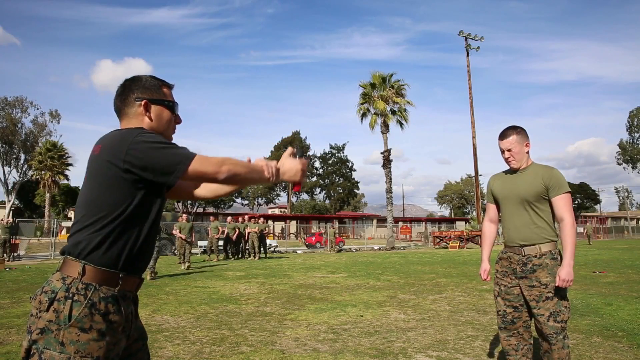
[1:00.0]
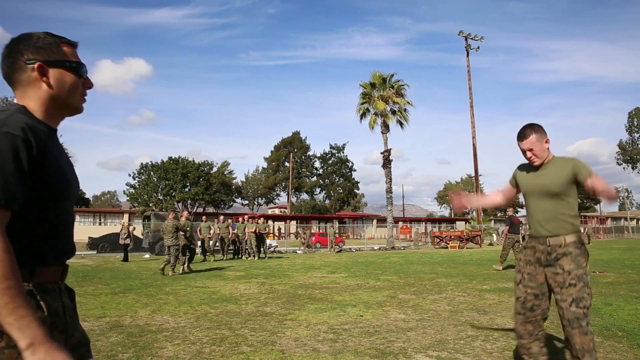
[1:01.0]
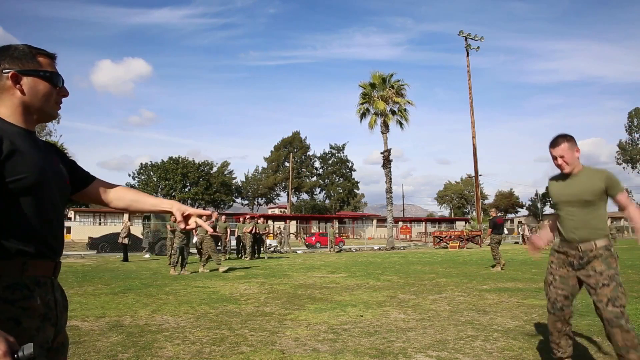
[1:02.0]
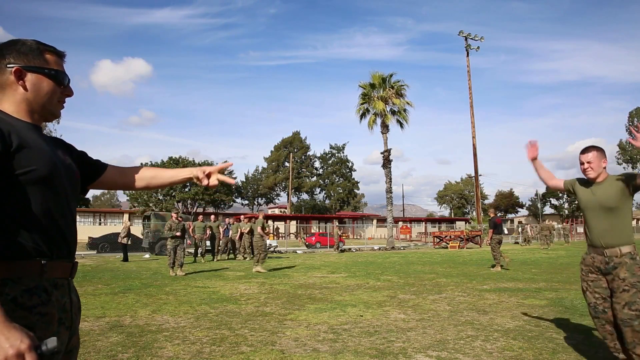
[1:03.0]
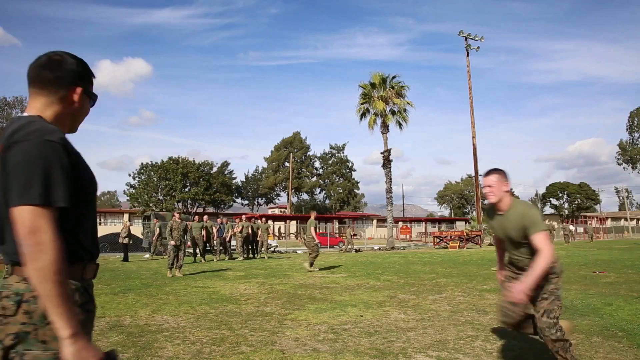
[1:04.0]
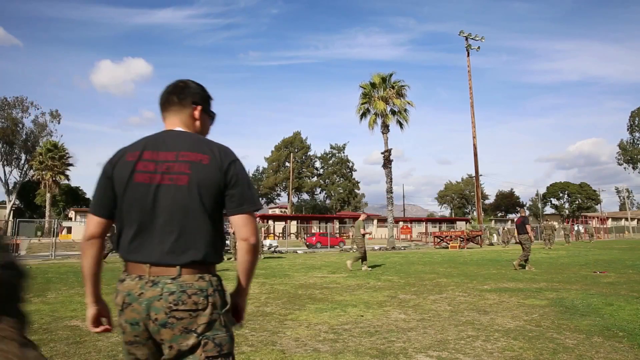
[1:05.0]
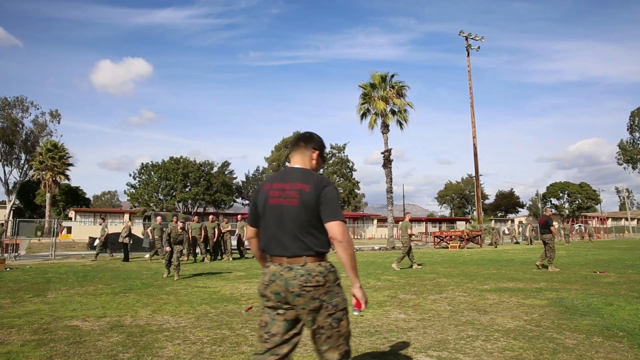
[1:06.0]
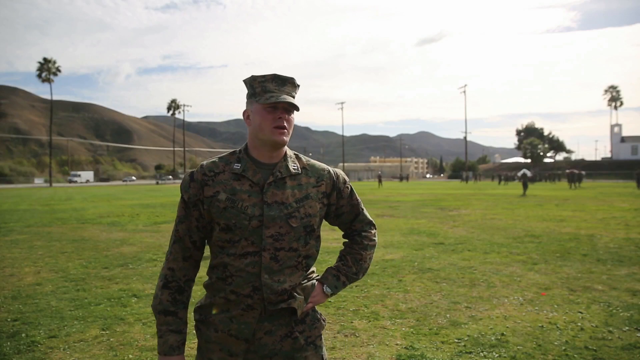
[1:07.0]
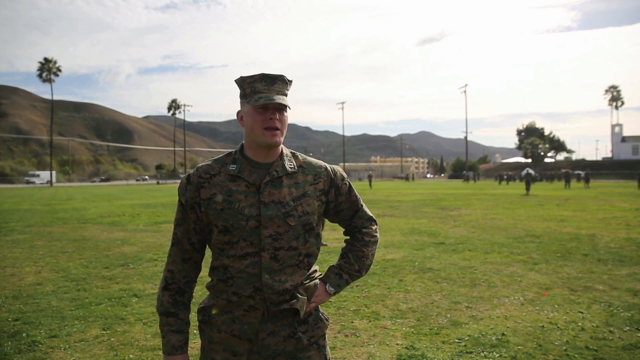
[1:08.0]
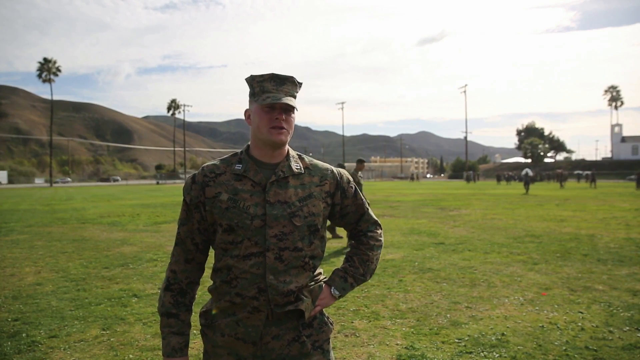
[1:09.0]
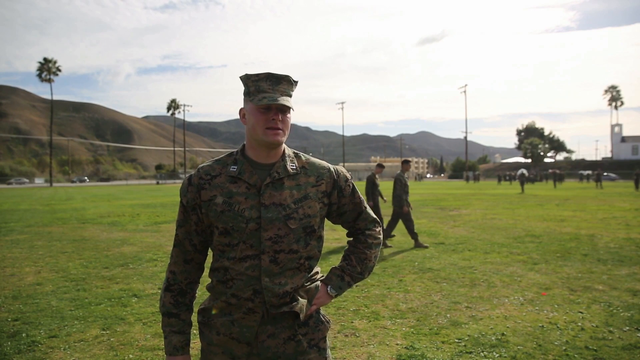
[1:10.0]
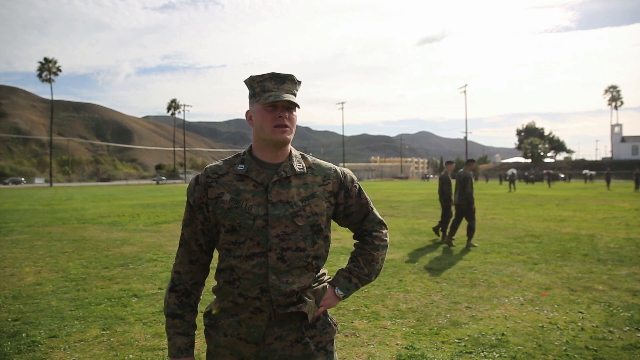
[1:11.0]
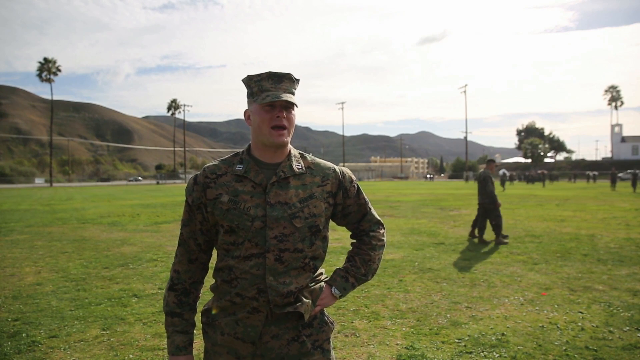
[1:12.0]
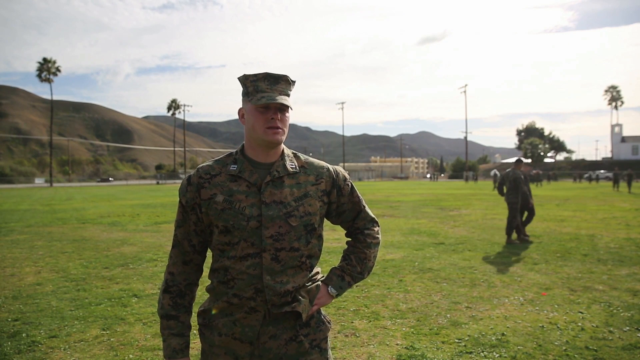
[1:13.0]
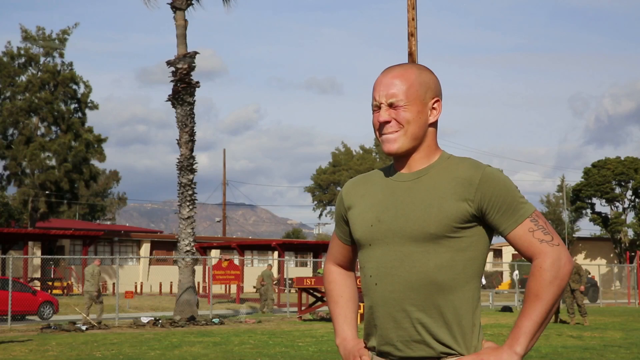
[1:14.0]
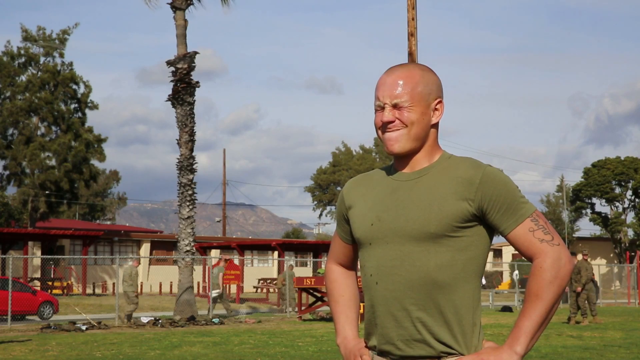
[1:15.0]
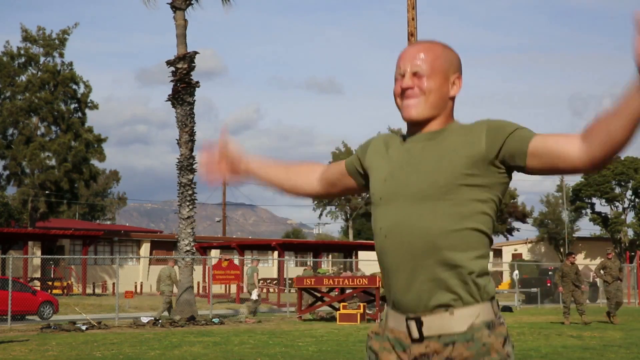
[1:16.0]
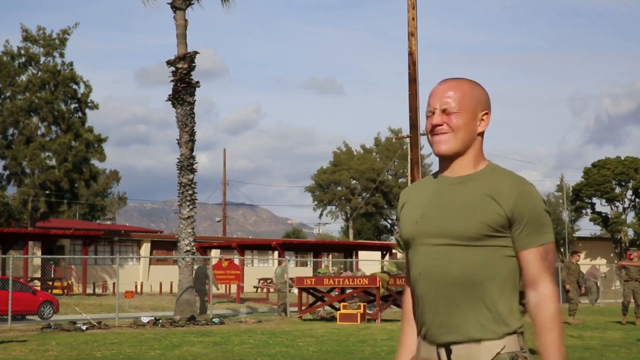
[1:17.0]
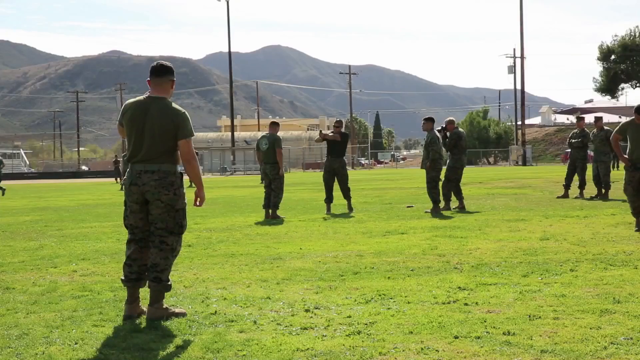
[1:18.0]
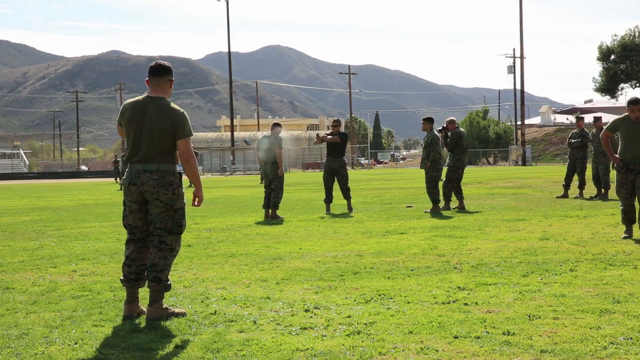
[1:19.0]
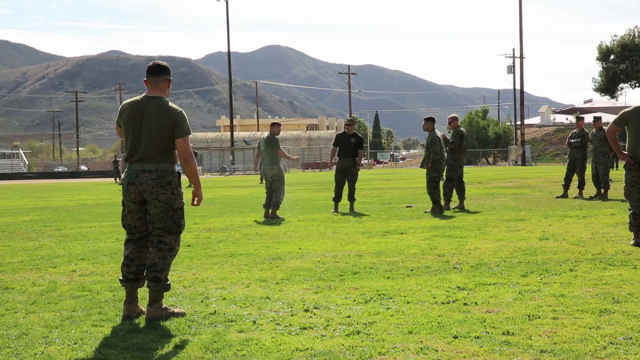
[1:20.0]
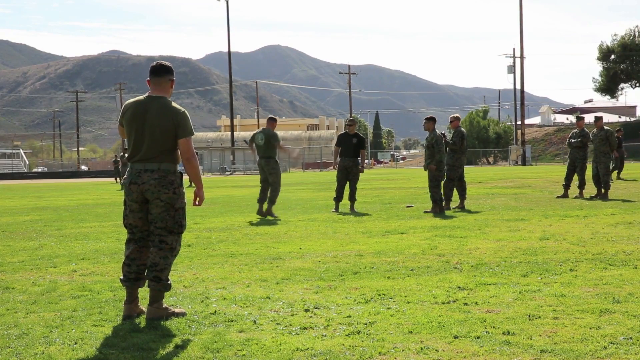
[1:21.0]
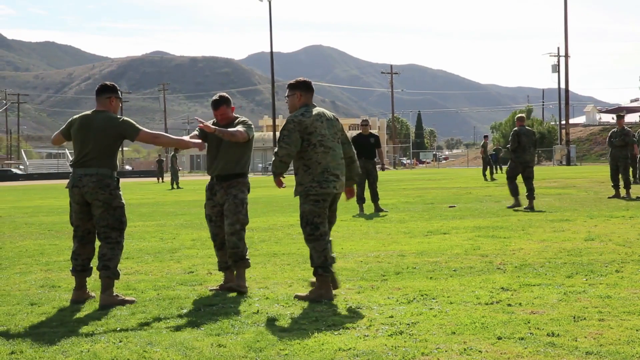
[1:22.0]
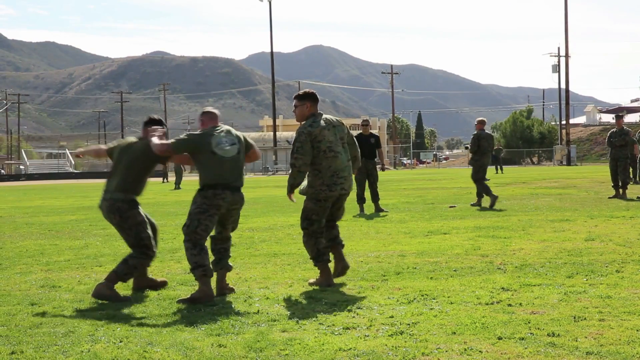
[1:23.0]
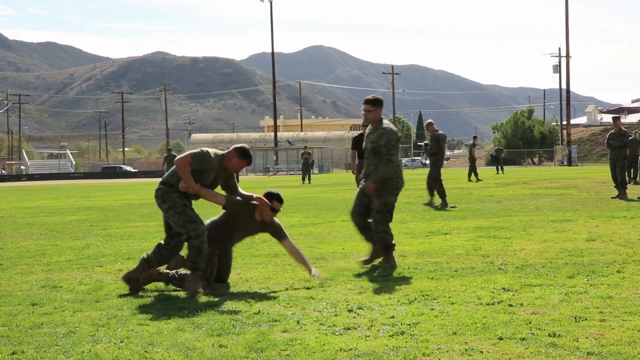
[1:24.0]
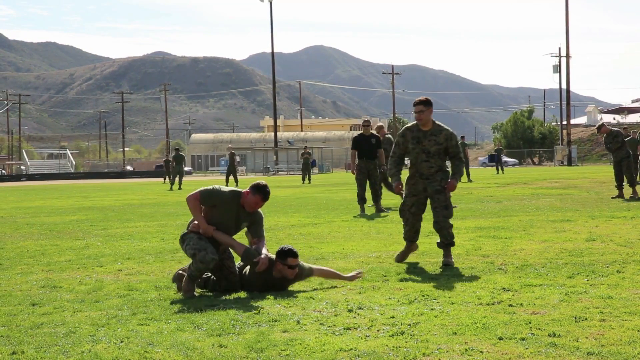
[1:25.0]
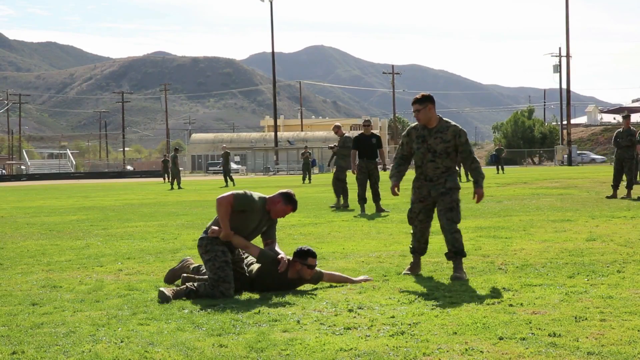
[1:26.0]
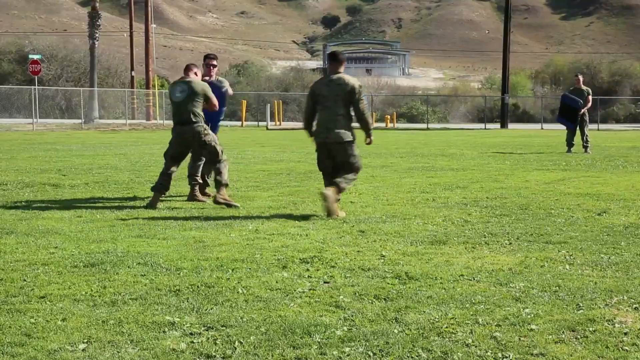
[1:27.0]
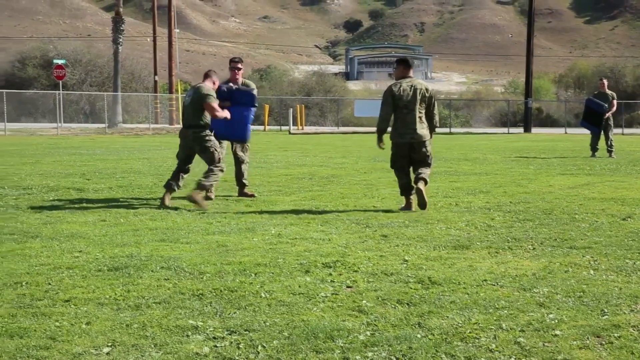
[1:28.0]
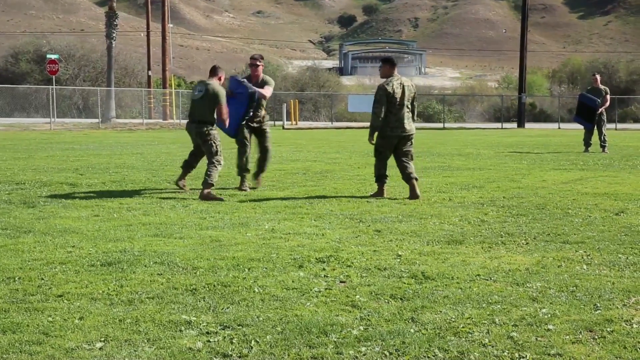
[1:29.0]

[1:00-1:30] At the spraying station, a person on the left wearing a camo belt, black pants and glasses sprays some sort of liquid, possibly pepper spray, into the eyes of another trainee standing on the right. The trainee does jumping jacks with eyes visibly closed and is then directed to run off to the left. In another scene, an officer who appears not to be a trainee, in a full camo uniform with a hat, talks to the camera in what seems to be an interview, while more Marine recruits are in the background and traffic goes back and forth behind them. Another view shows a trainee getting sprayed in the eyes, seemingly with pepper spray or some other liquid, with eyes kept closed. In the back is a wooden sign with a red background and yellow writing that says "1st Battalion." There is also what looks like a house or a small office building: a one-story building that looks like concrete or stucco, with some smaller windows. It has a sign in the same coloring, brick red with yellow writing, which is difficult to read from this angle. Palm trees and mountain ranges are behind them. Other angles show recruits getting sprayed in the face, practicing takedowns on others, and doing hand-to-hand combat.